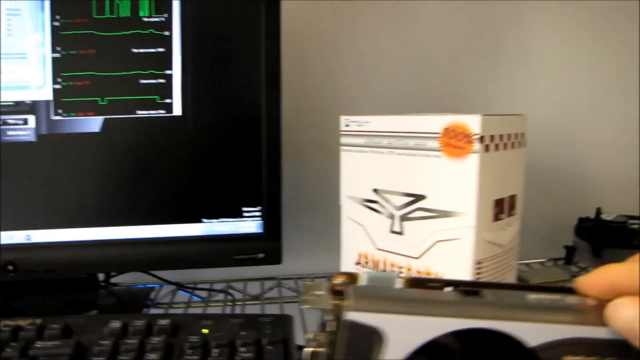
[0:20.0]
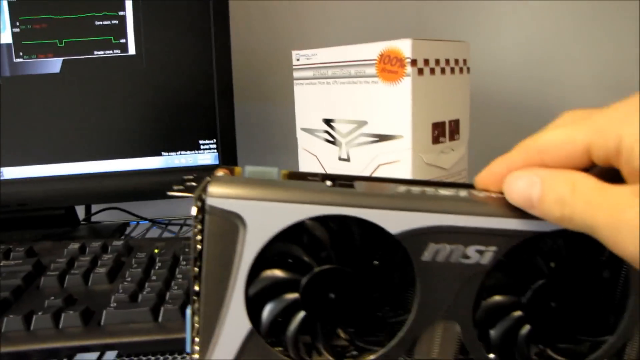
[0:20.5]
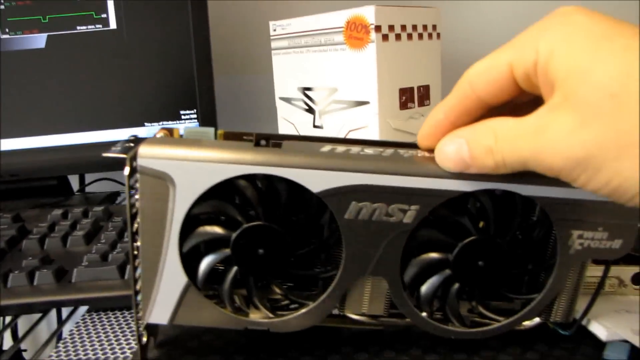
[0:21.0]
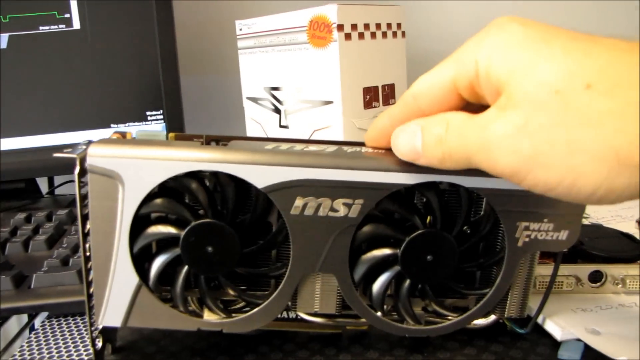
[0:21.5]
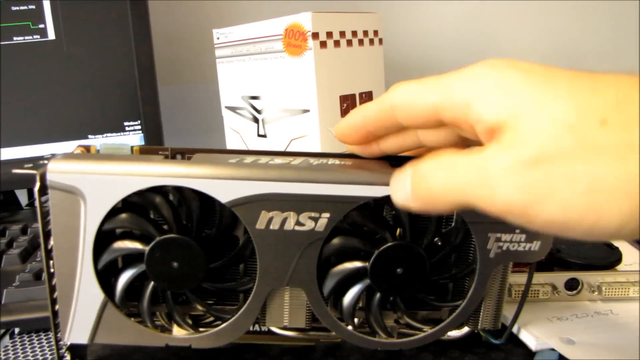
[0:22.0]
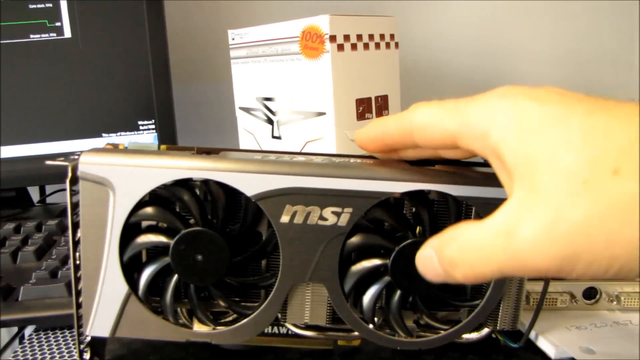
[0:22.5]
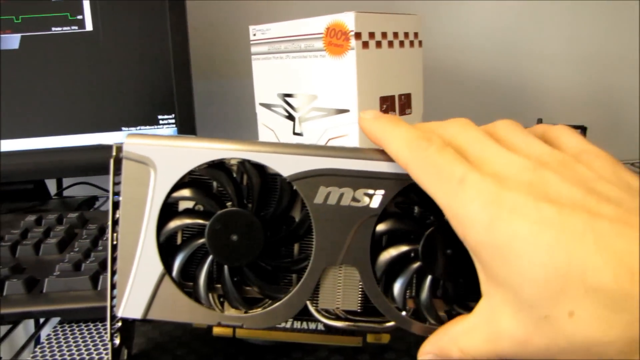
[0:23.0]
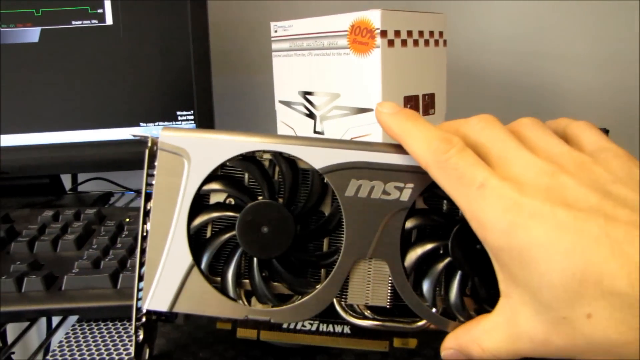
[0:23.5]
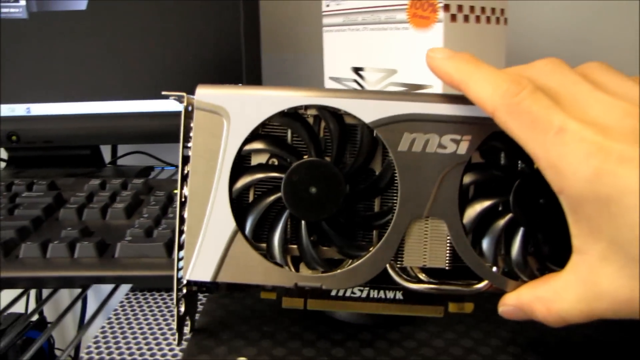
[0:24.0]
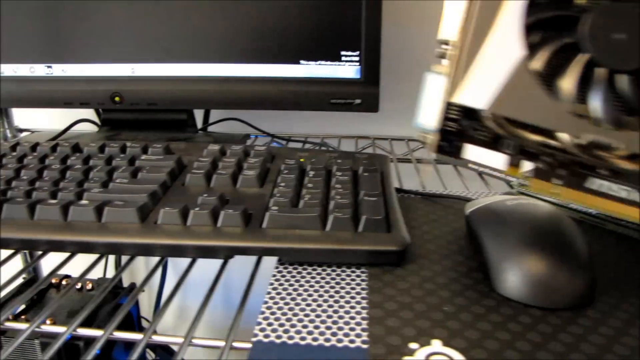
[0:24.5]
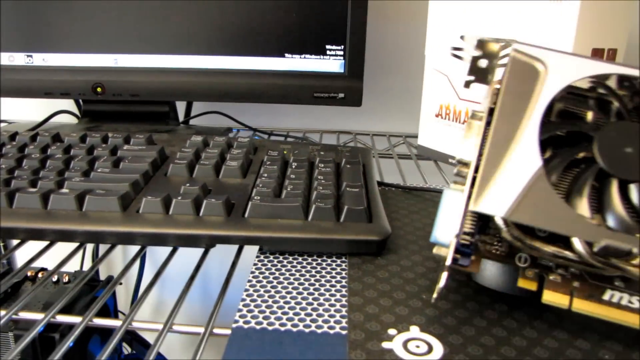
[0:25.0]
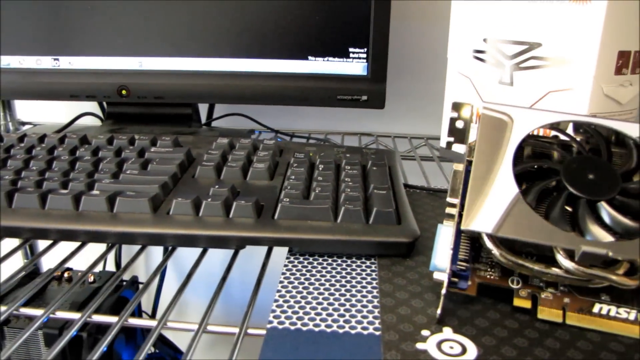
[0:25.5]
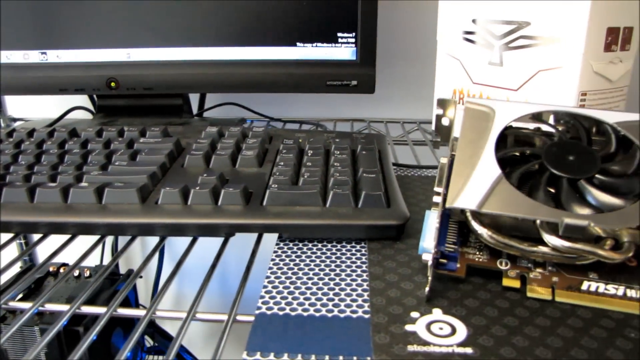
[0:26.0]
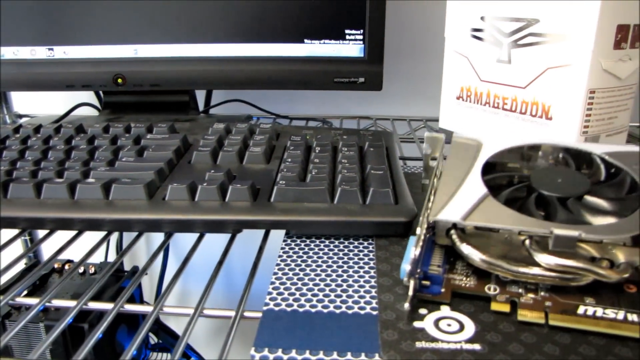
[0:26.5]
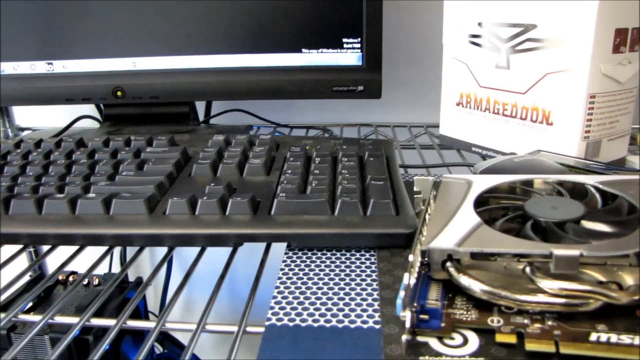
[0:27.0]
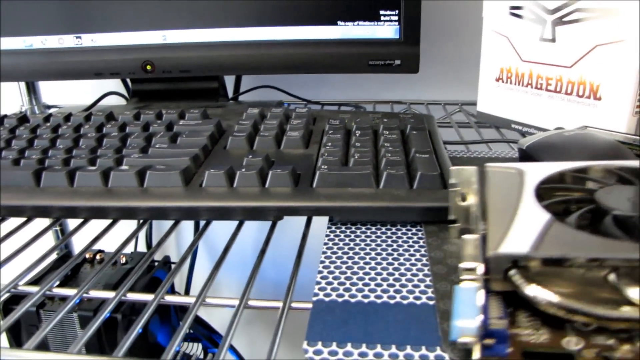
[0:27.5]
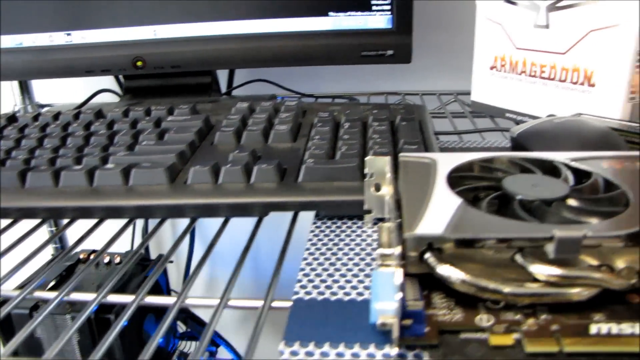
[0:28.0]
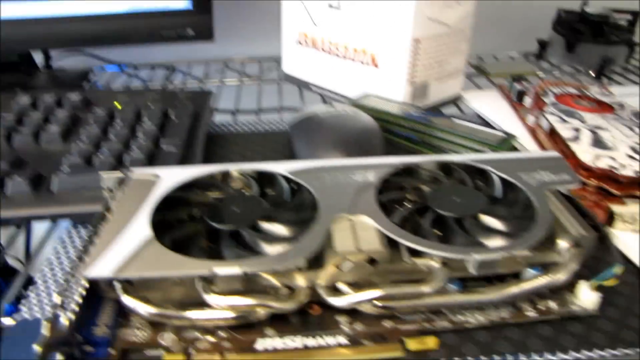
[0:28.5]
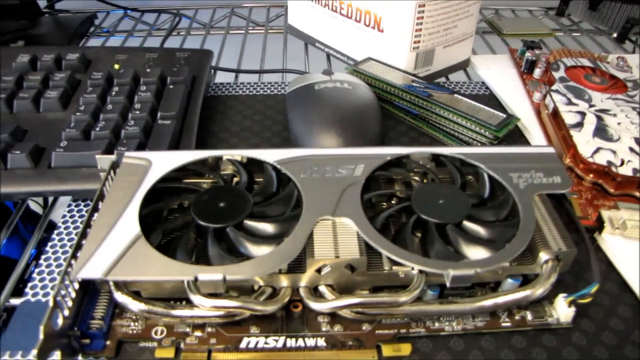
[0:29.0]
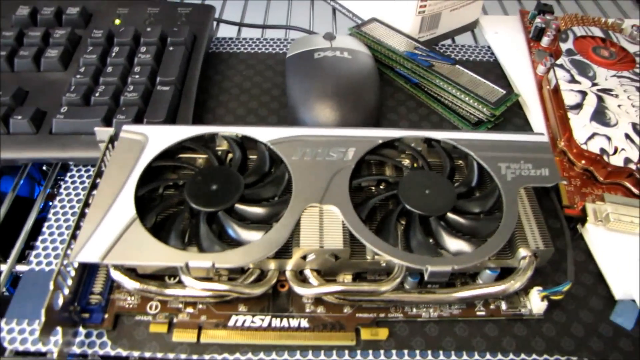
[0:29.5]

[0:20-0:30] Someone's hand comes into frame holding some sort of fan, which looks like a piece of another machine, possibly the computer. It looks like two small fans side by side inside something silver, with the fan blades visible. The piece the person is holding reads "MSI" and "MSI Hawk"; it seems to be a component of the computer, and they show it off. Inside the areas that look like fans are a bunch of wires and lines all running through it, connected and mixed together, apparently the different components of the piece.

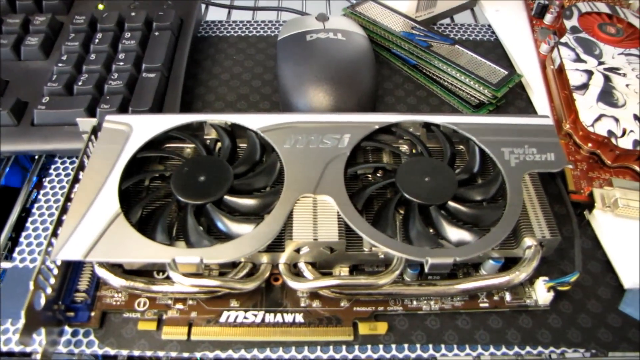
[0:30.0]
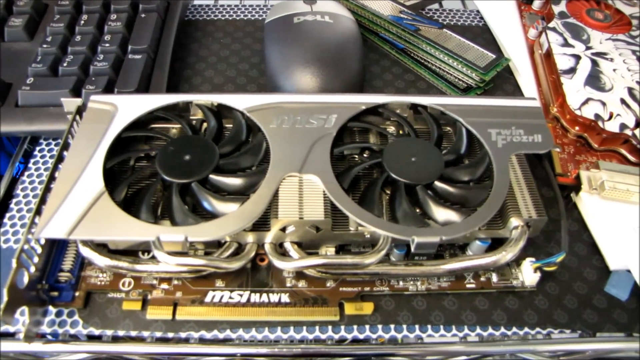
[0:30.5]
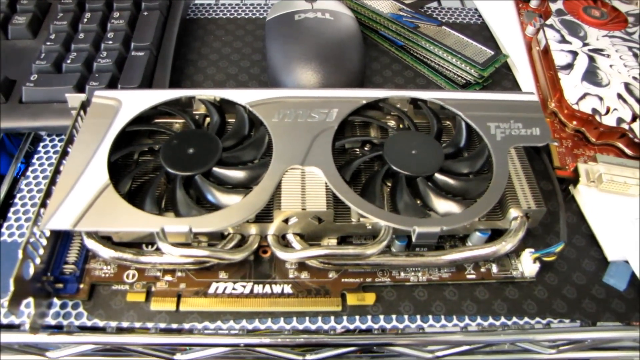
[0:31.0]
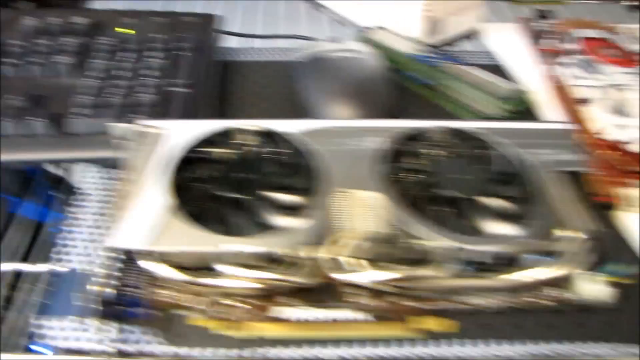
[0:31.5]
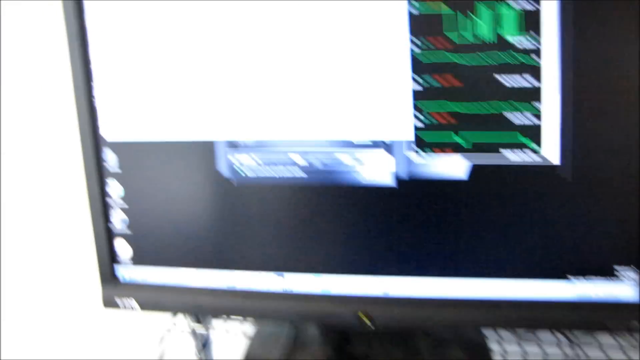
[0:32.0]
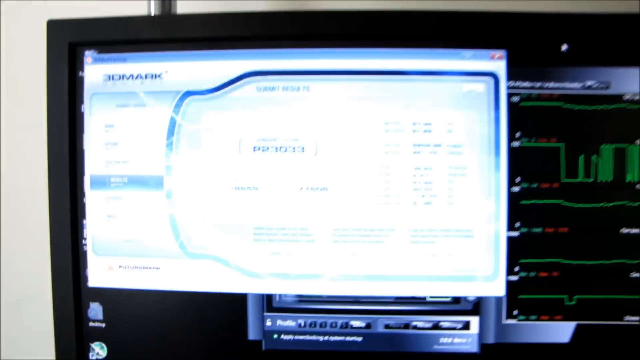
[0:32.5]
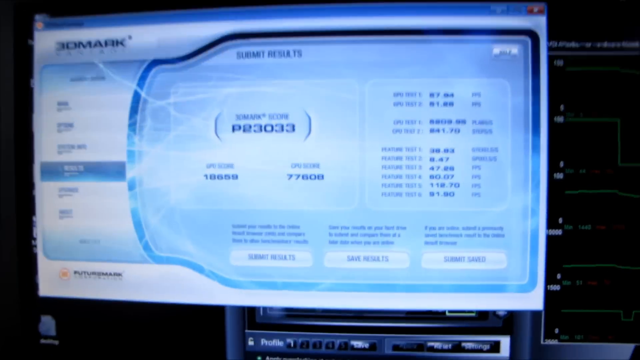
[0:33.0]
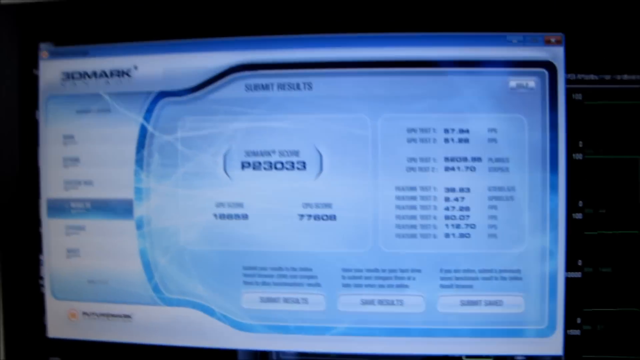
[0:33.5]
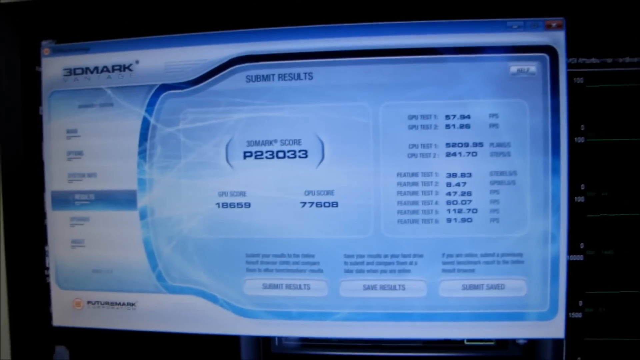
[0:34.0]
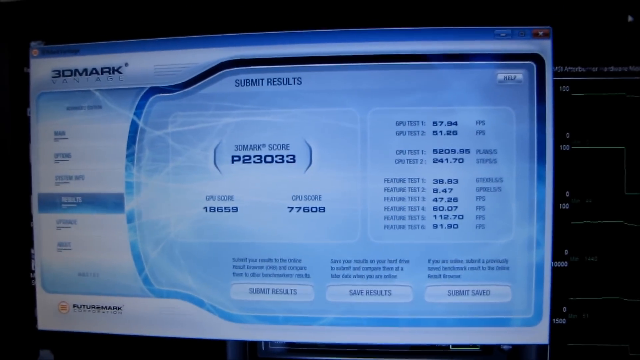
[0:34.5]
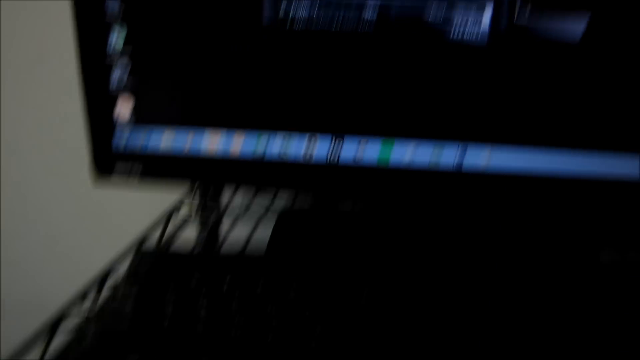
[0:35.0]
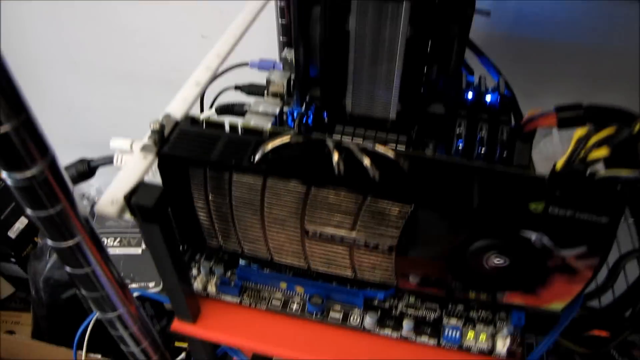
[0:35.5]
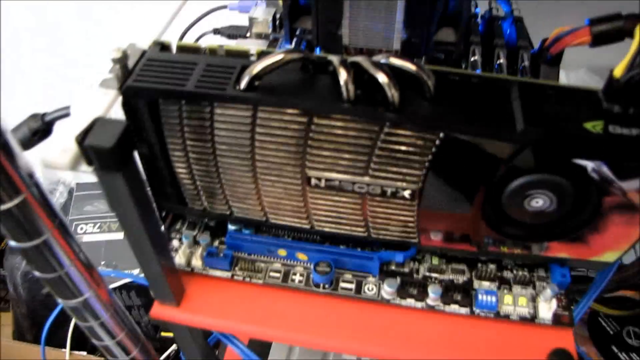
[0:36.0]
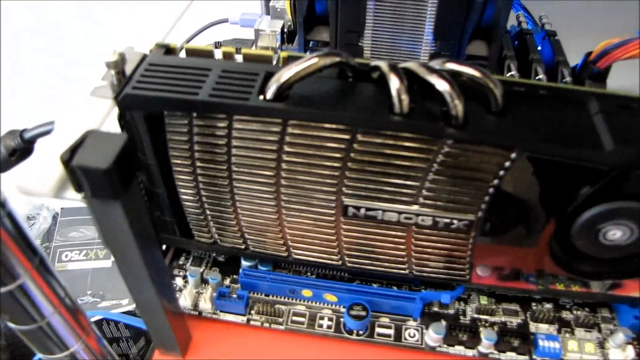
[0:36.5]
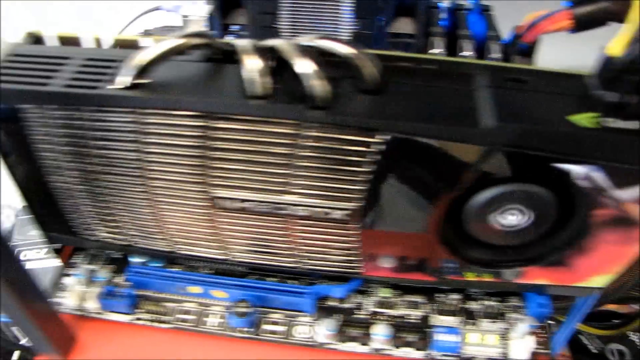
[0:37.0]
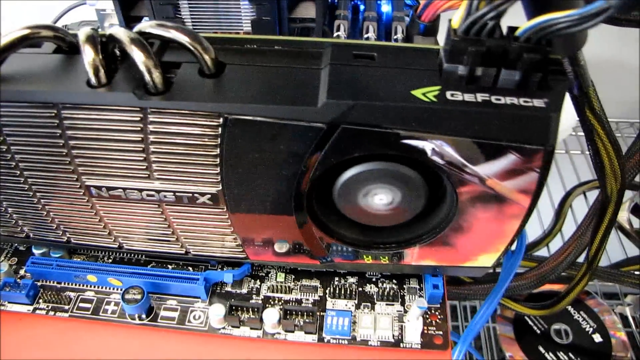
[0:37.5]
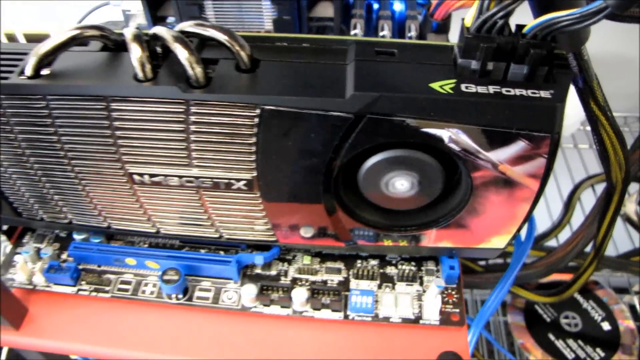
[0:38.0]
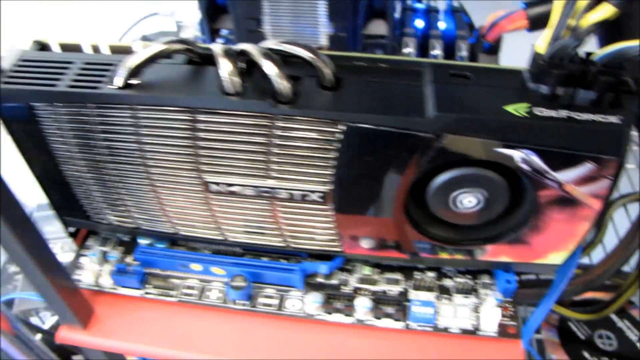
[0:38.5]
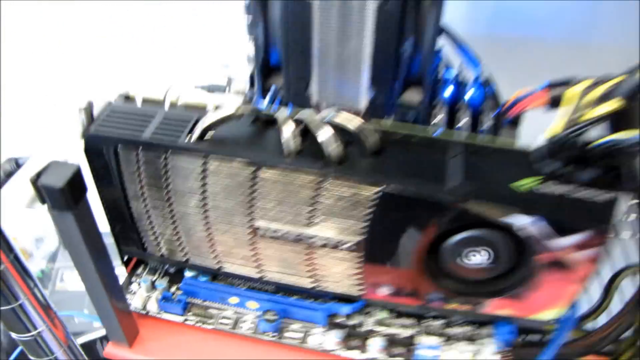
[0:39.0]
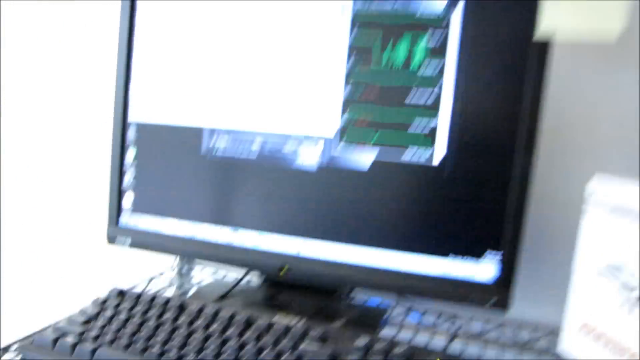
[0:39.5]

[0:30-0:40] The fan component labeled MSI Hawk is shown briefly before the camera pans back up to the computer screen. It zooms in on the screen, which shows some numbers and other information, too briefly to read, though it says something like "Joe mark". The camera zooms out from the computer and goes down below on the shelf-like desk where the computer is, to something underneath it that says something like "G force", with components moving on it; it is some sort of machine or component of the computer.